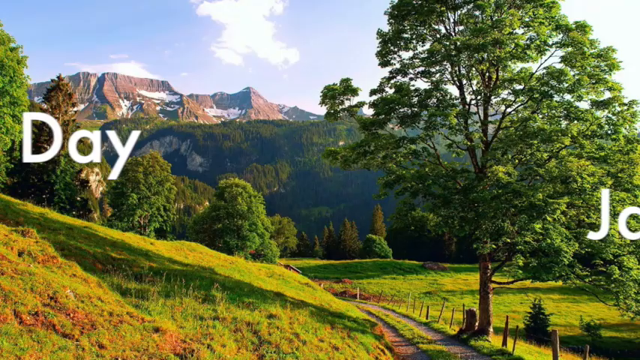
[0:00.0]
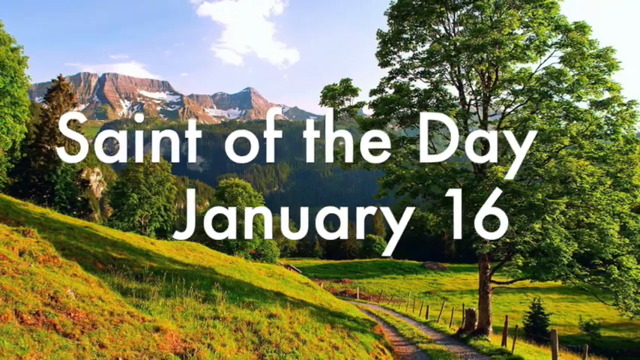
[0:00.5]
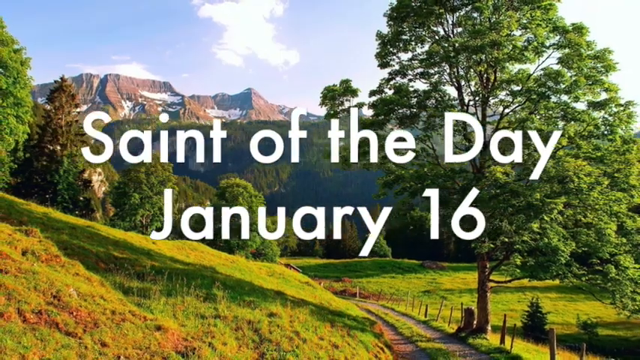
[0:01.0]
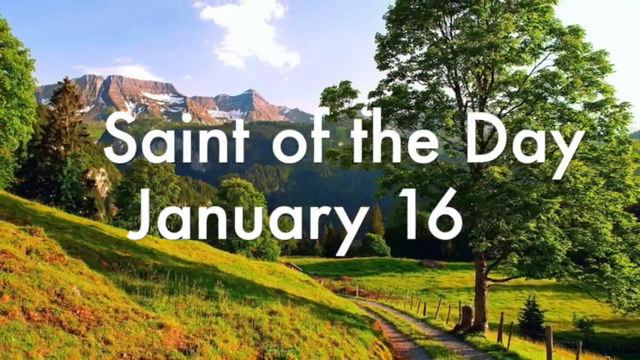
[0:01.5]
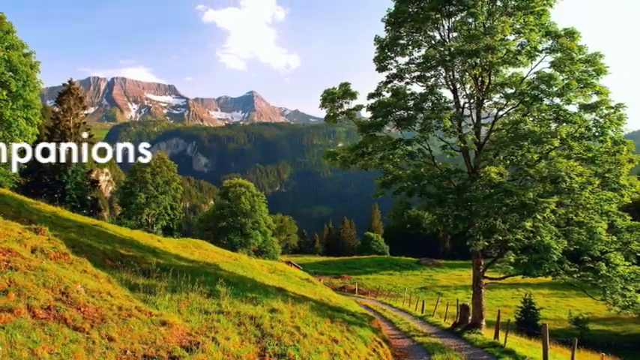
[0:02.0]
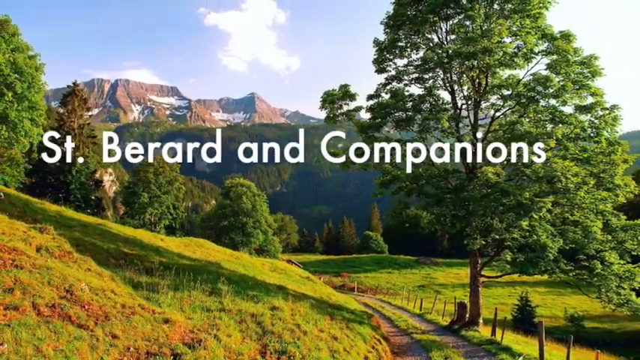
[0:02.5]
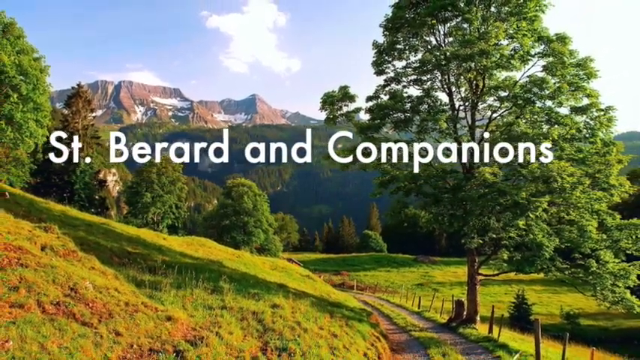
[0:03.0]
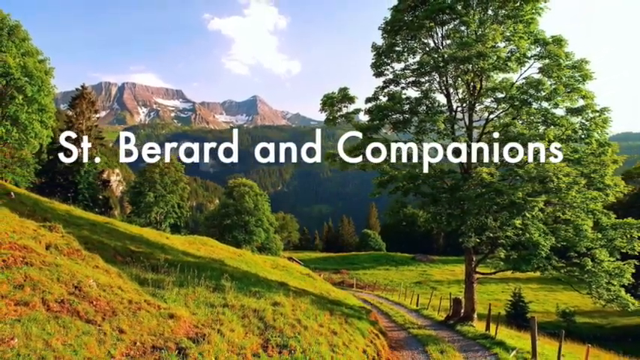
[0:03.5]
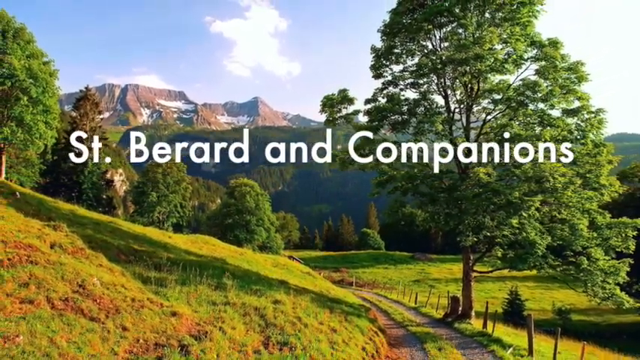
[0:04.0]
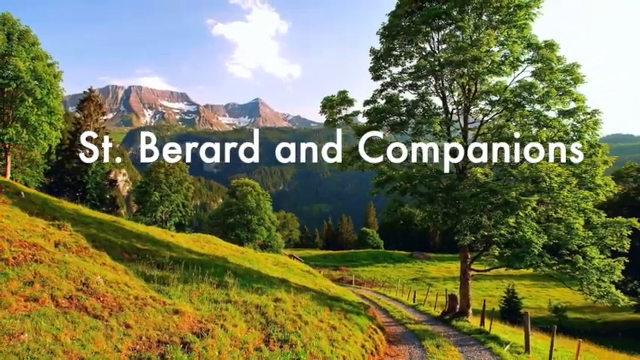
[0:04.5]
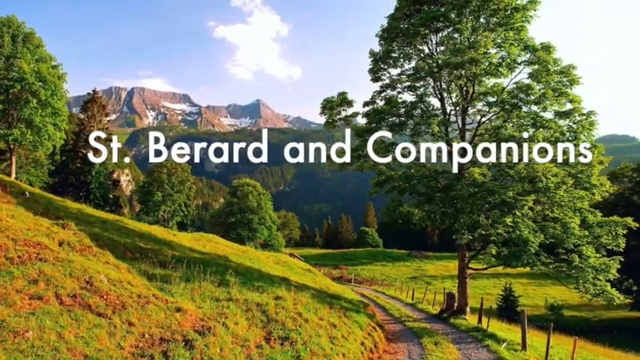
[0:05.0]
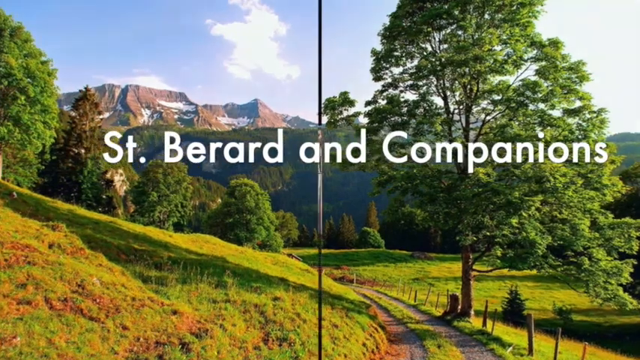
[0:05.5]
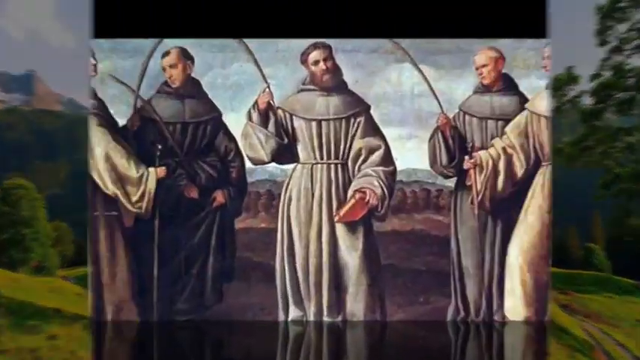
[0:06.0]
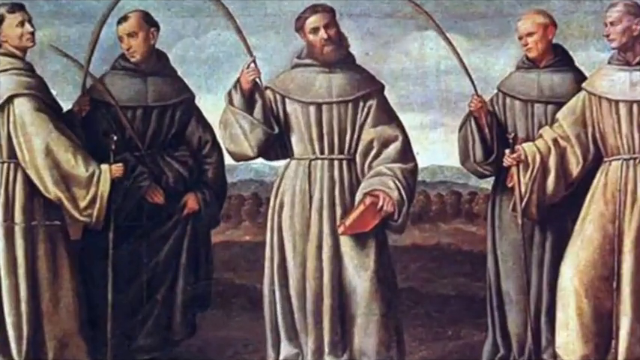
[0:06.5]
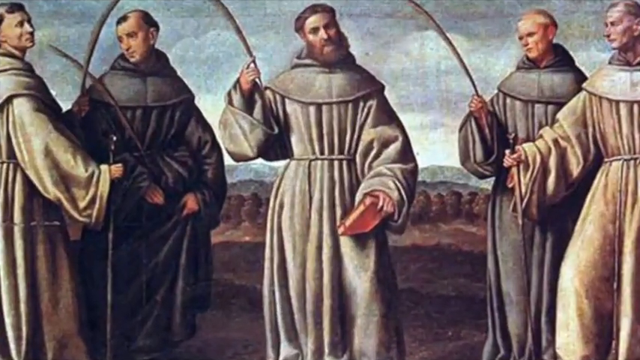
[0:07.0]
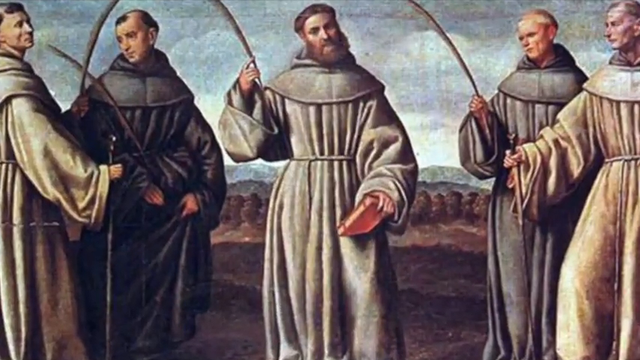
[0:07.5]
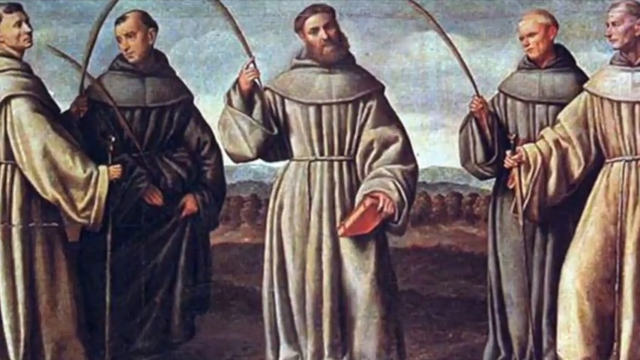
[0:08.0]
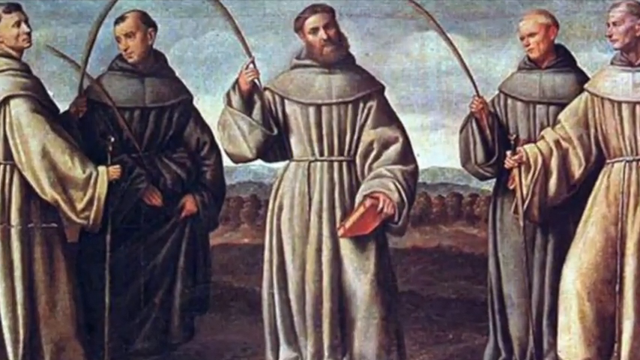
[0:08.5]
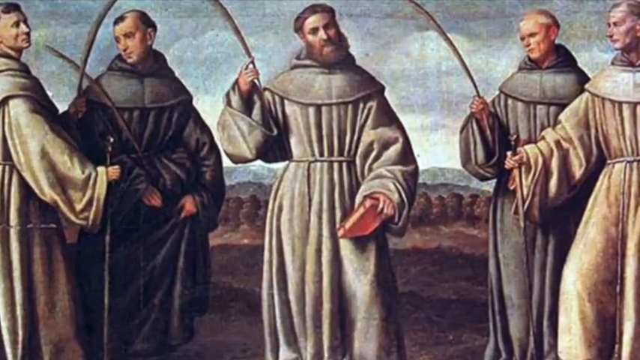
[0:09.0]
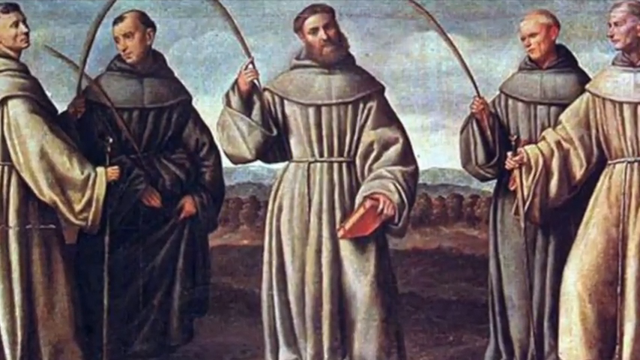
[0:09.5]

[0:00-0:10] The video opens on a picture of a country landscape with a large tree on the right-hand side. There are some mountains in the distance, the scene is sunny and green, and light green grass is in the foreground, with a small country road just to the left of the tree. In the middle of the screen, large white text reads "Saint of the Day", with a second line reading "January the 16th". This text animates off the screen and new text appears: "St. Bernard and Companions". The background image slowly zooms out, revealing more of the tree, the country road and the grass on the left-hand side, along with four or five trees on the hill on the left. The scene then transitions into a picture, portrait or painting of five people.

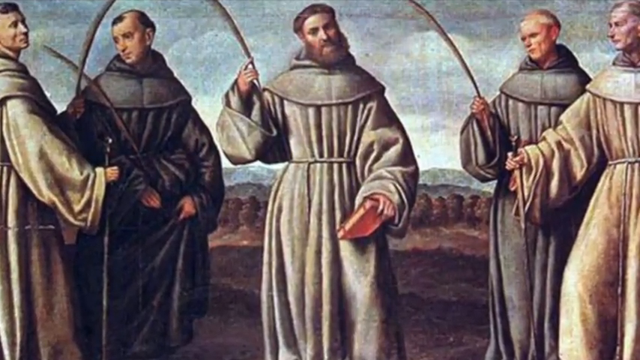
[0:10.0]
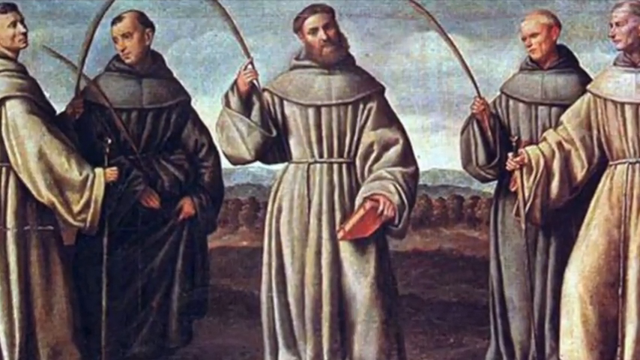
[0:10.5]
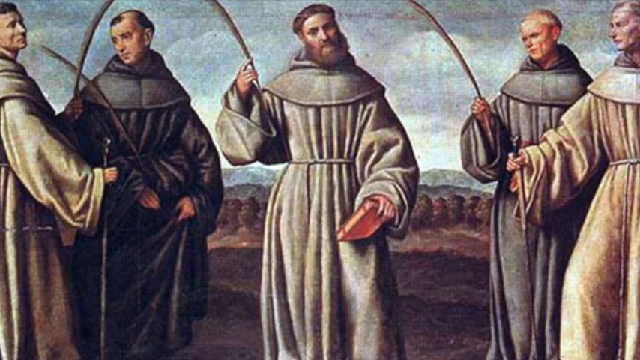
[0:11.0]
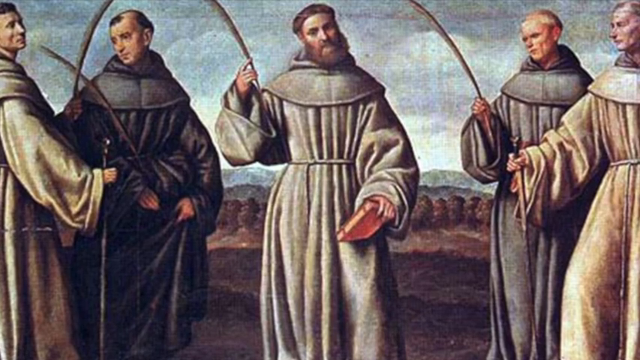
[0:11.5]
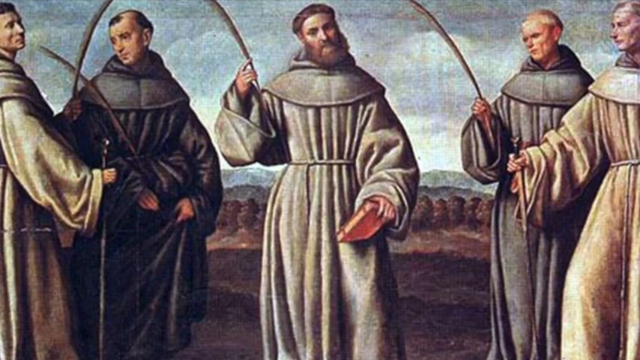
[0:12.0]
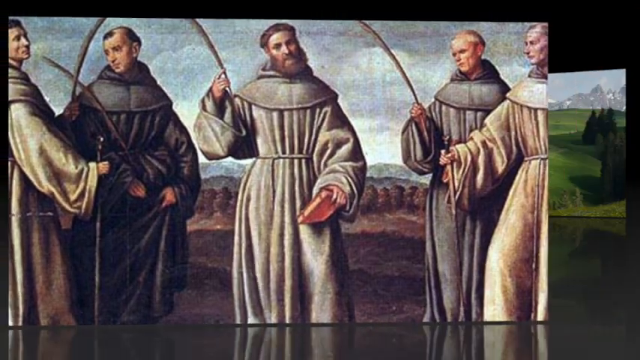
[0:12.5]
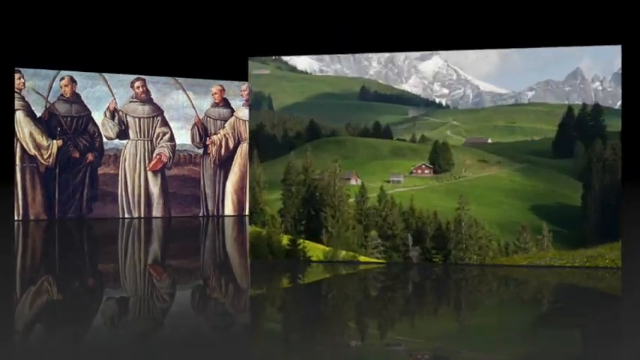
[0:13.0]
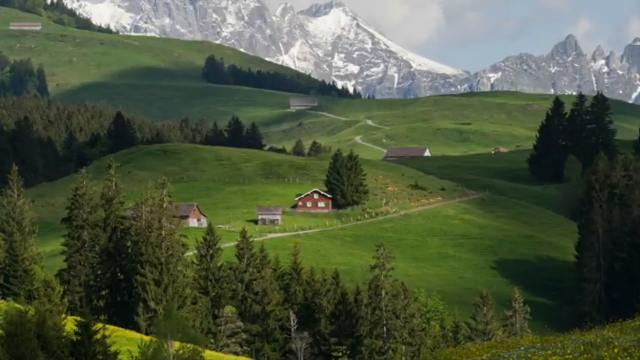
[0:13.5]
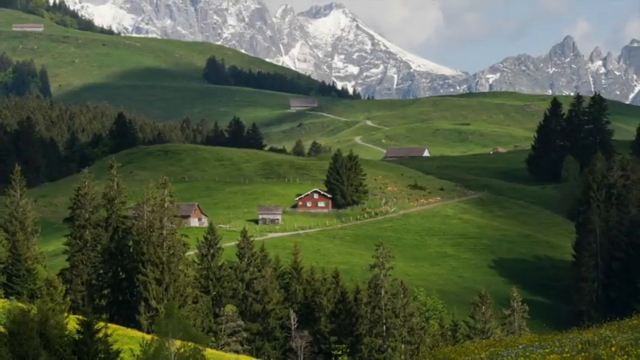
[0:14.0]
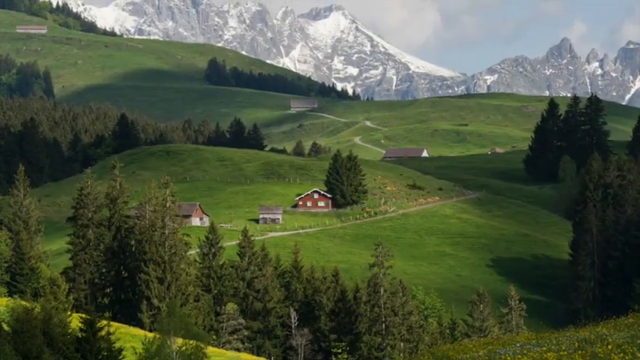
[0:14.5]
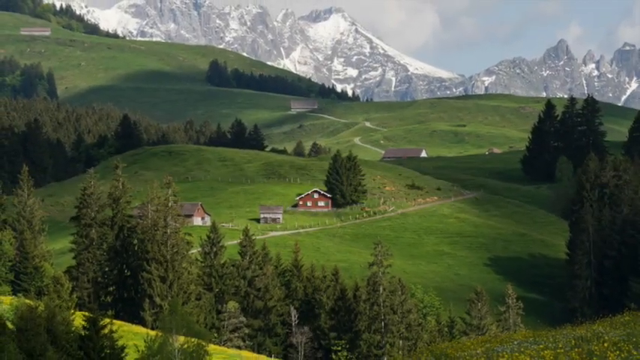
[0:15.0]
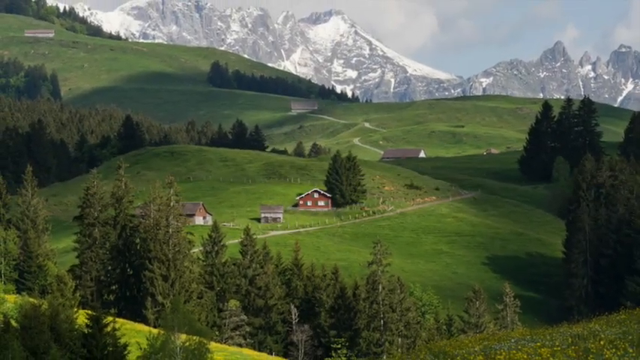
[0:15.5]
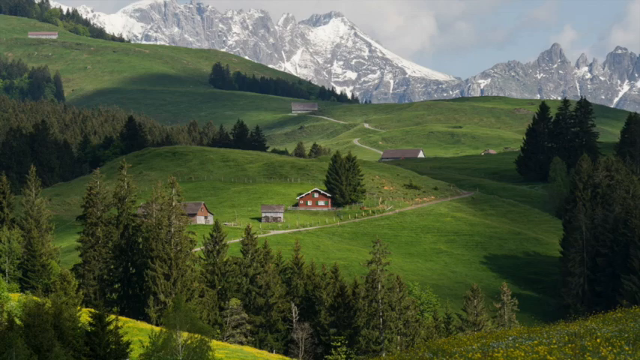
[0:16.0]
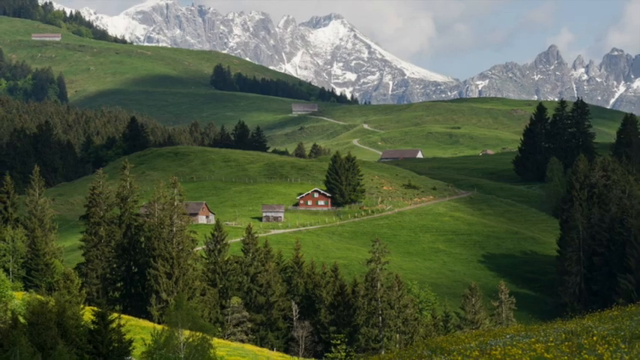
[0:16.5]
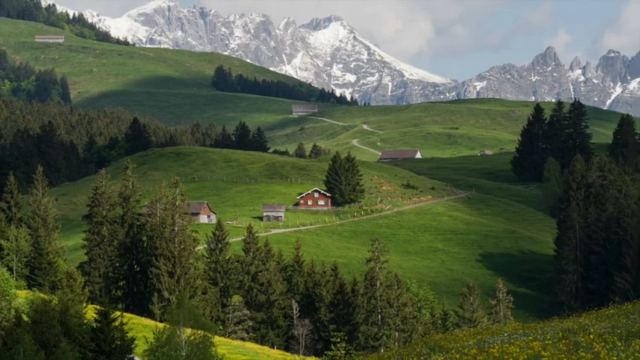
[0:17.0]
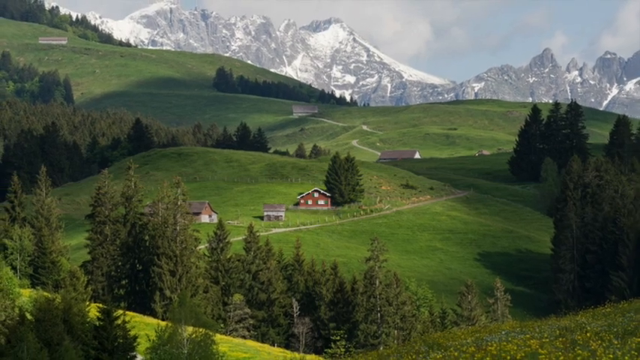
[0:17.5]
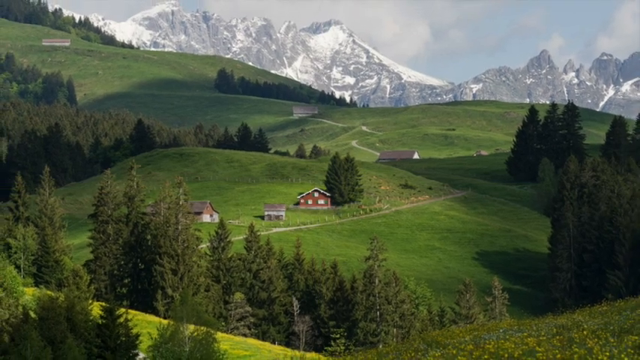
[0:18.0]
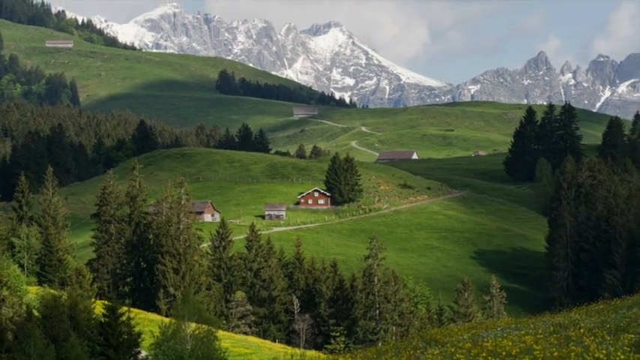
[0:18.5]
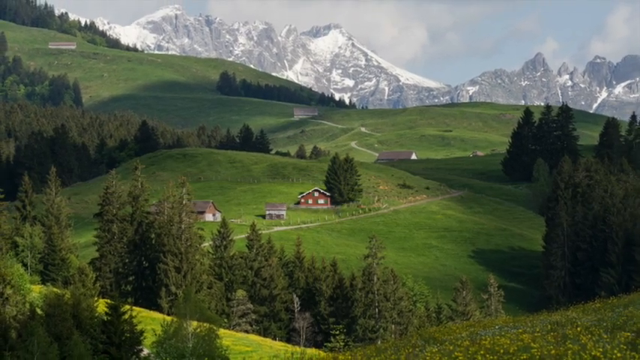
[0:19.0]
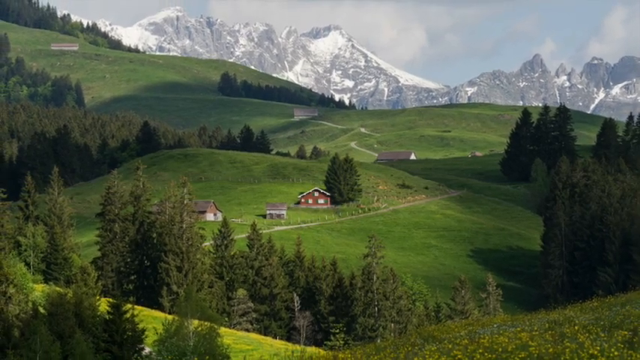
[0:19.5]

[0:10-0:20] A religious painting shows five people, one in the middle and two on either side, who look like old religious figures. Each holds a long feather or stick in their hand, and the two on the far left and far right are holding long sticks, like walking sticks. The background is like a forest or field, with some sky and clouds. The figures wear long robes in white, grey and black. The figure in the middle holds a red book in his left hand.